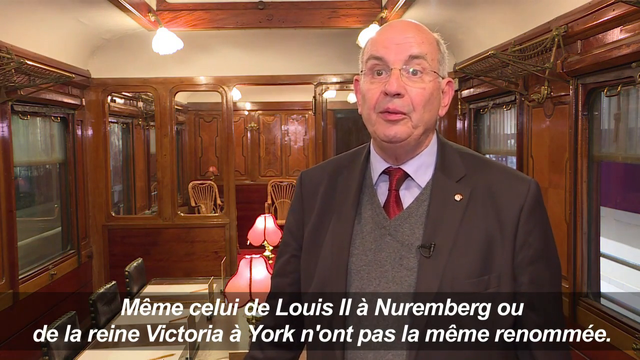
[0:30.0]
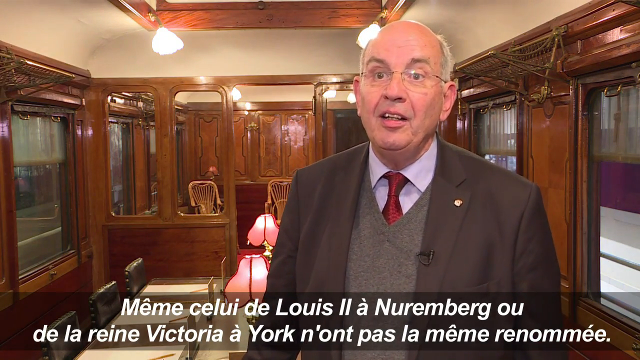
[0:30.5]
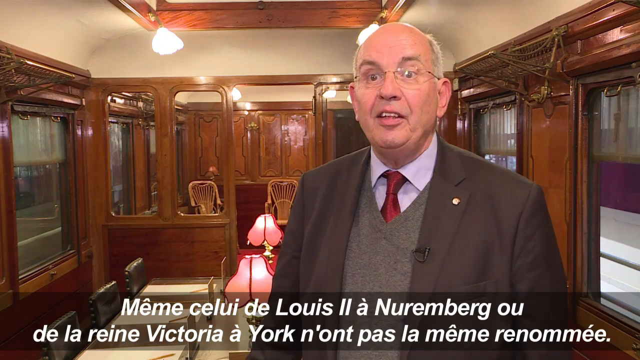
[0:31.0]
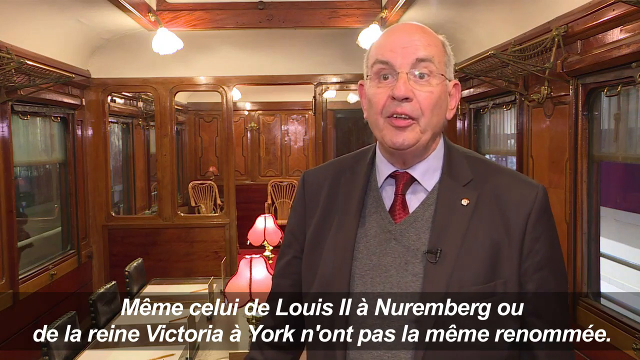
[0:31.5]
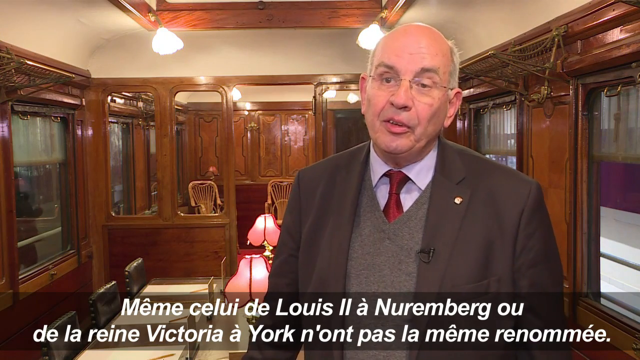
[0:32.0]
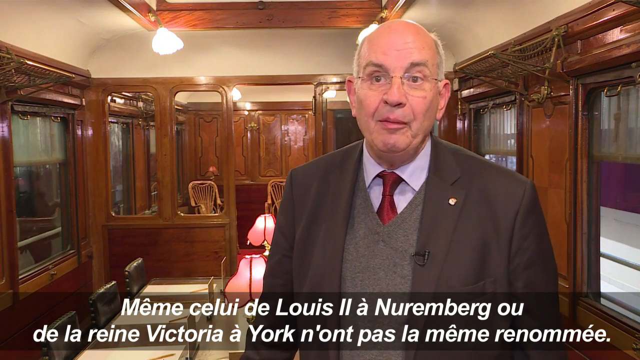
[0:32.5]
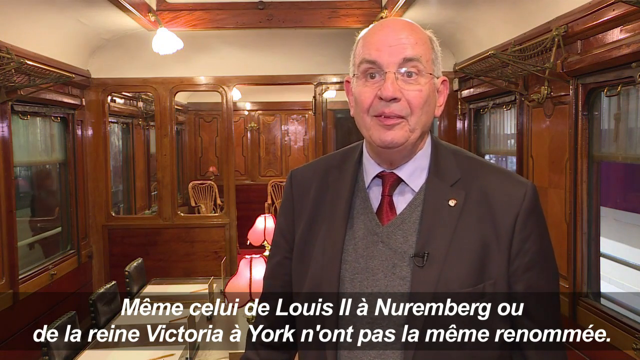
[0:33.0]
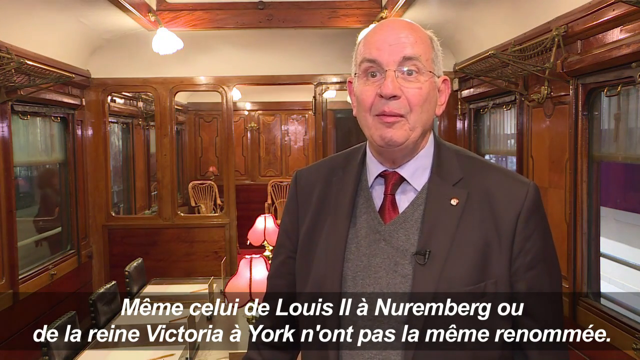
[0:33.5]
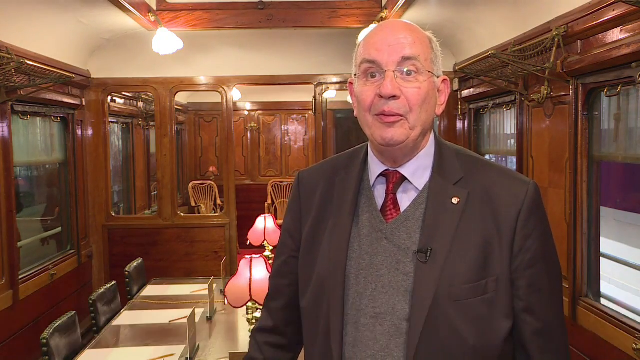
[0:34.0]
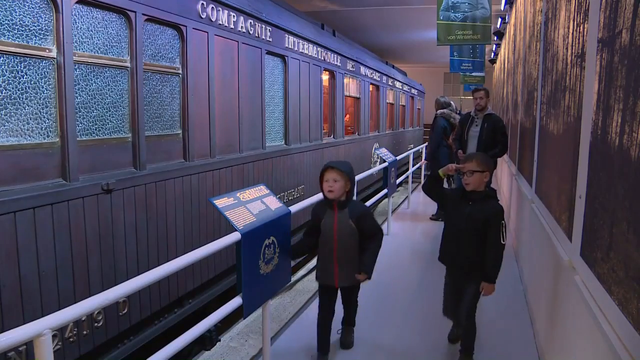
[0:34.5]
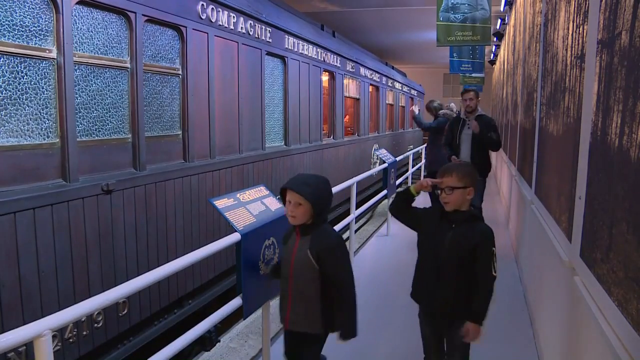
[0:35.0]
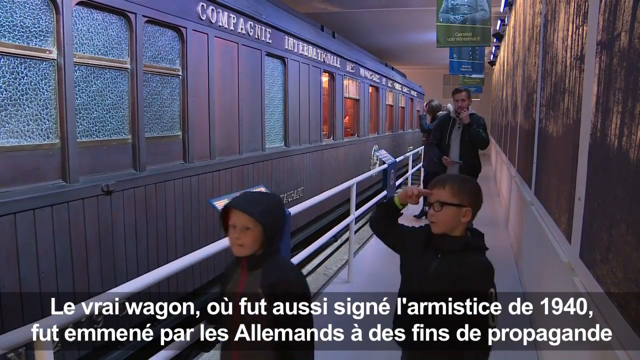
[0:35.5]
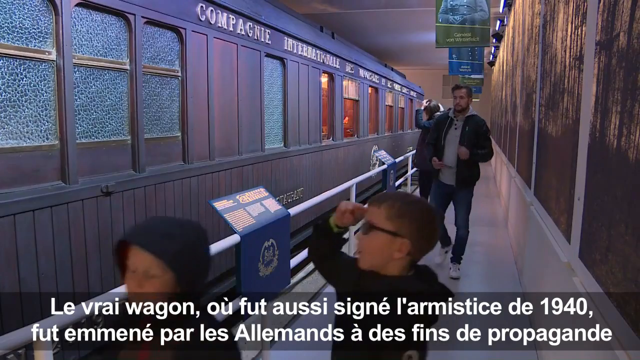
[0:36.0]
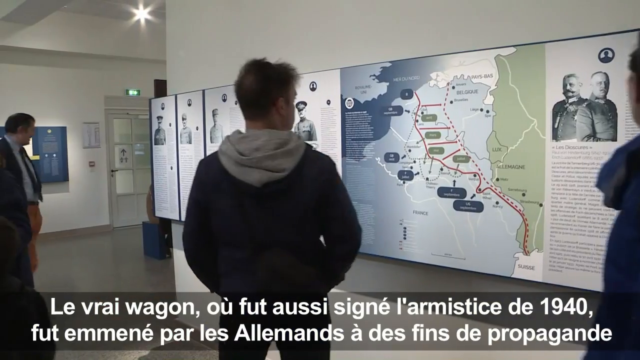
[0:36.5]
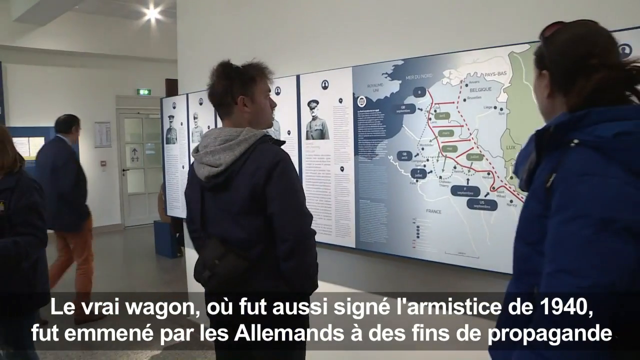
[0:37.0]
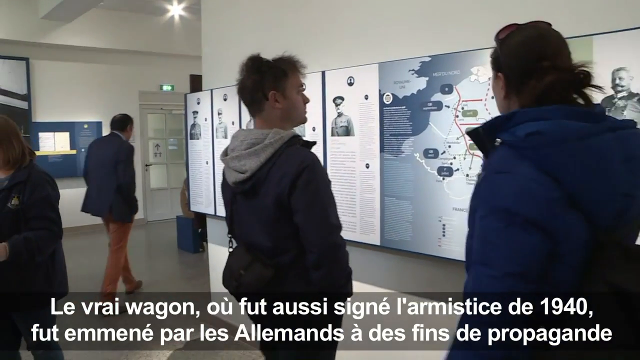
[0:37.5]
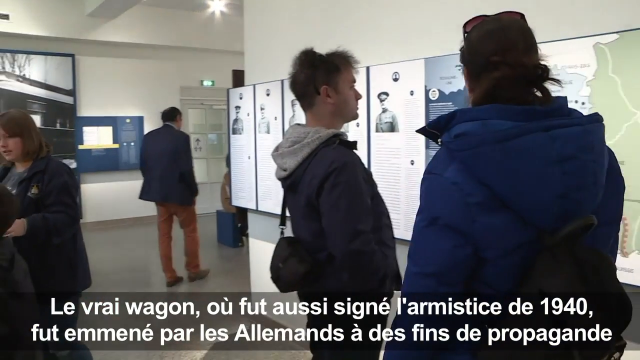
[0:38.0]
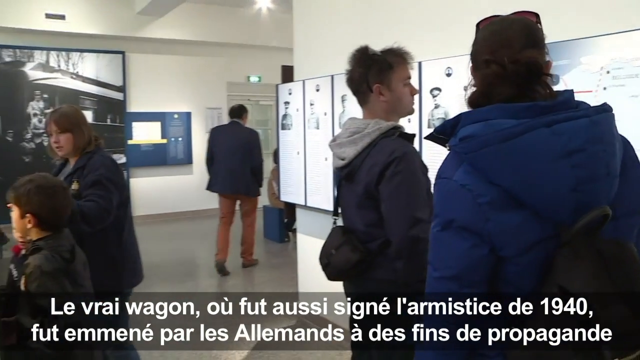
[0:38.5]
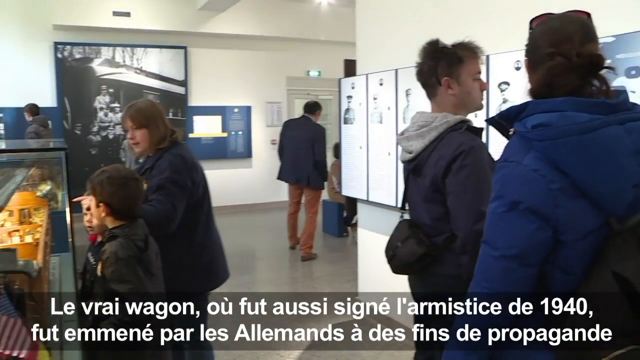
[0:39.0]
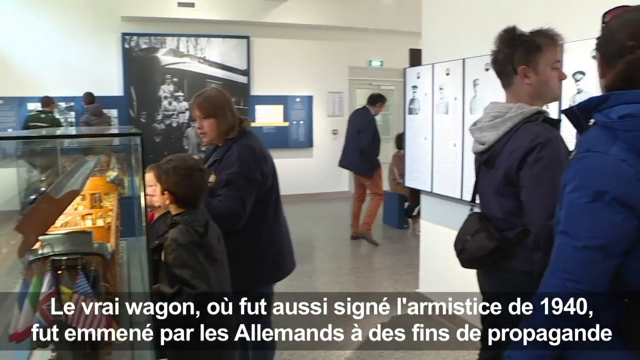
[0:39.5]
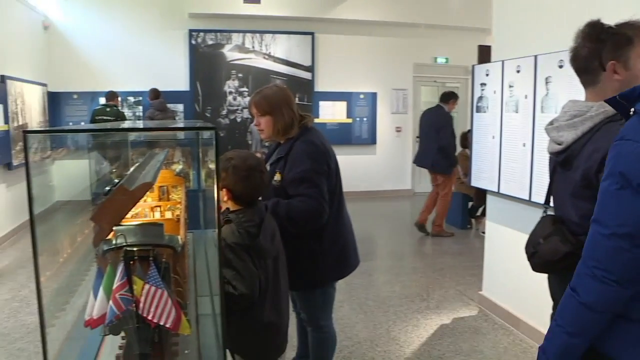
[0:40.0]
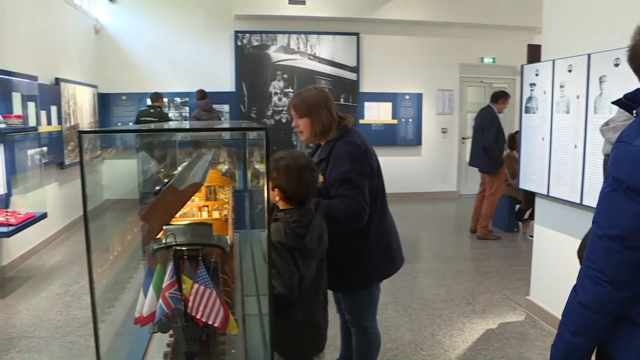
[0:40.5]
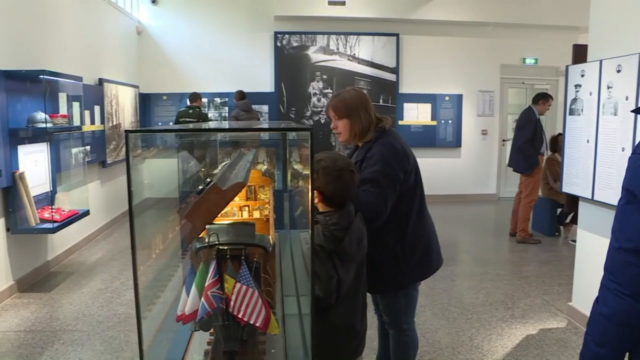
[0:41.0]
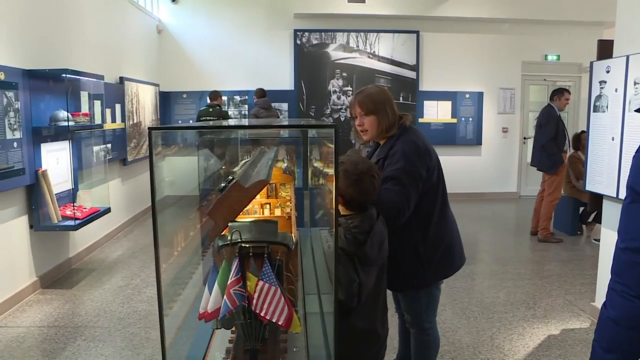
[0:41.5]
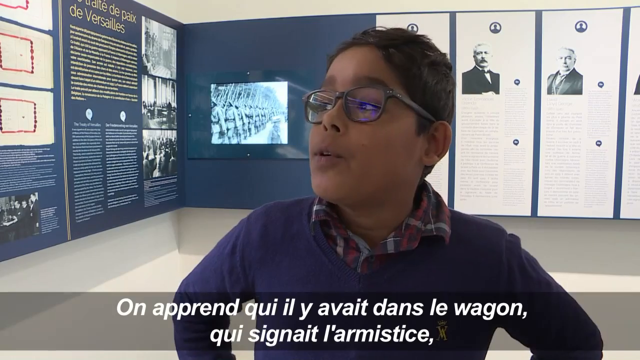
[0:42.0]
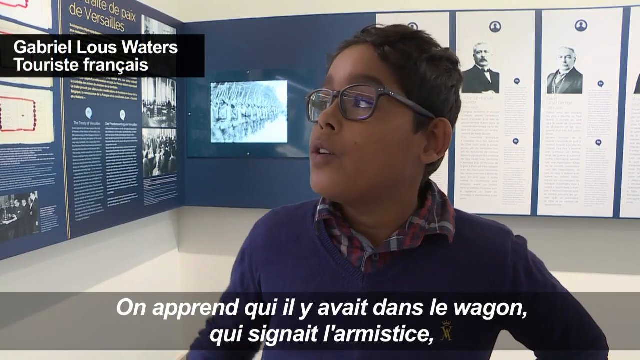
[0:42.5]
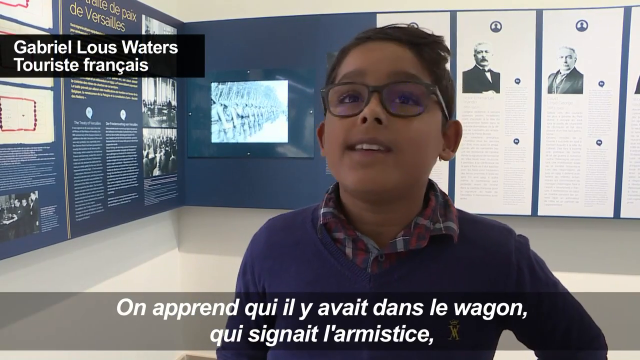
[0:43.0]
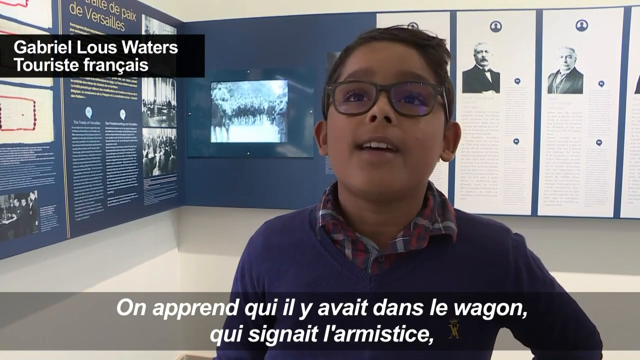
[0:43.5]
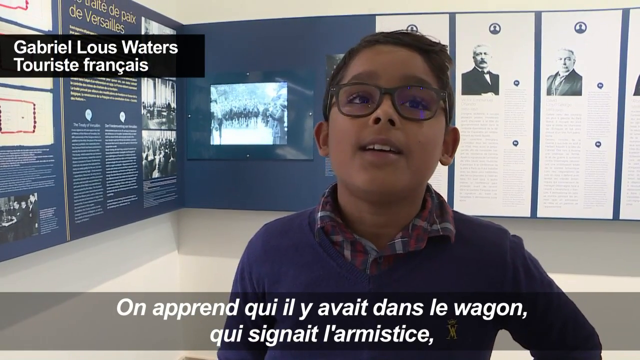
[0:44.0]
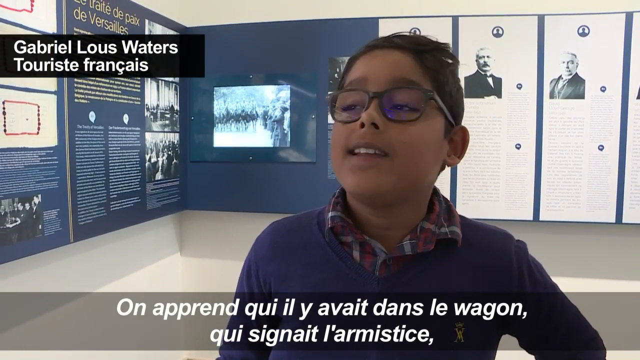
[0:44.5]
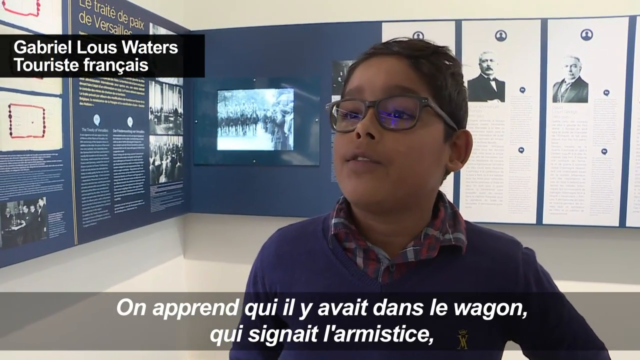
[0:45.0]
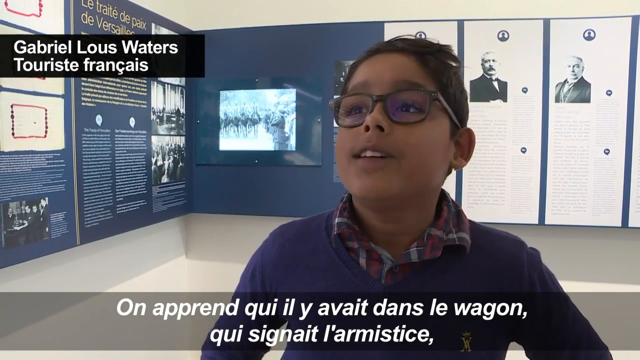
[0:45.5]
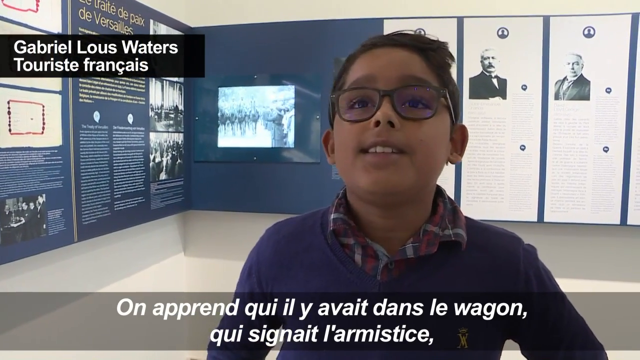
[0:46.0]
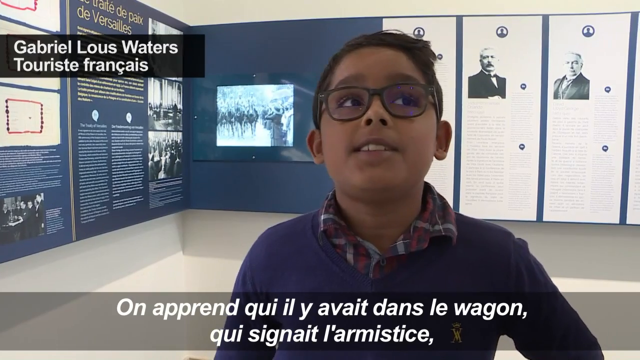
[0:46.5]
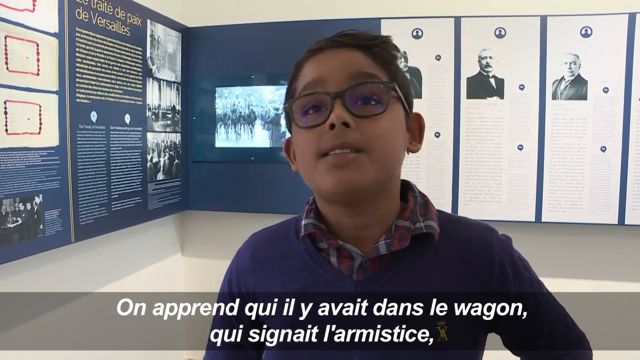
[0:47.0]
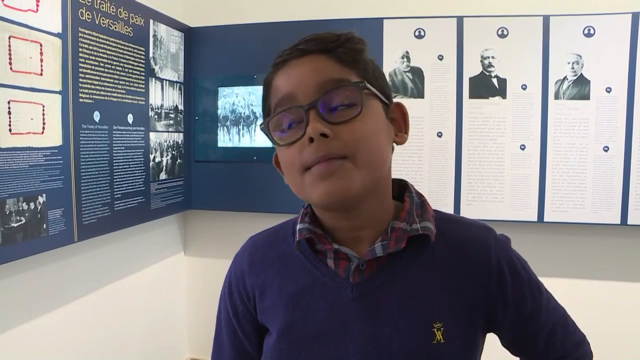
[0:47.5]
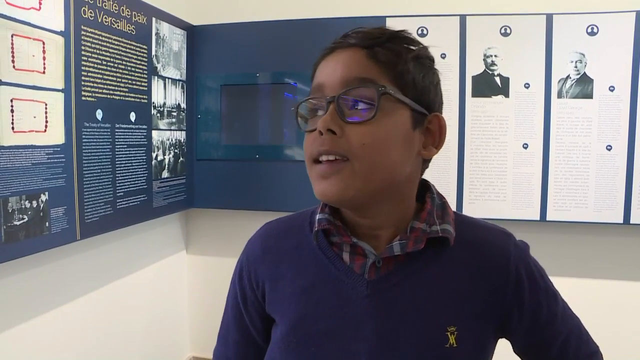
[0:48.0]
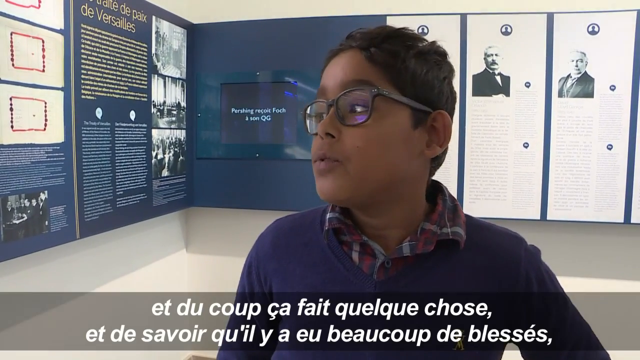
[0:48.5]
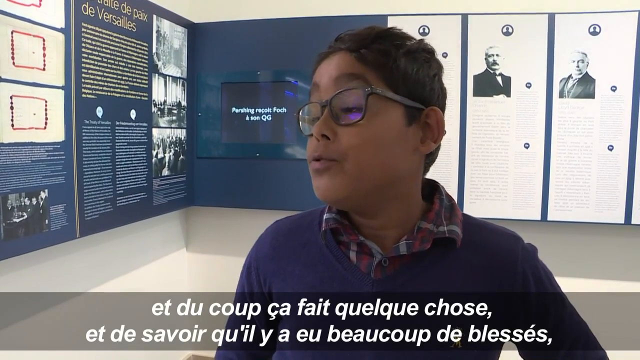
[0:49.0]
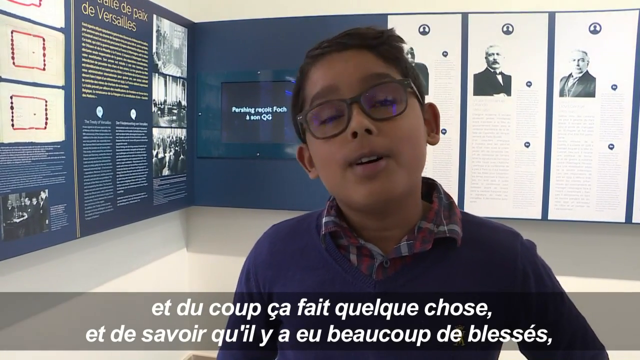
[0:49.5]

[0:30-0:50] Bernard Letemps, president of the Association du Memorial de la Clairiere, talks inside the carriage in the museum. The view then shows the outside of the carriage, with a couple of children and other members of the public walking past it beside a guardrail. One of the boys at the front, on the right, wearing glasses, points to his head as if saluting. A caption on the bottom of the screen begins "Le vrai wagon" and ends "à des fins de propagande". Another wall in the museum shows a map of Europe, with various members of the public looking at it, and there is a model of the carriage in a display case. A young boy, Gabrielle Lous Waters, a French tourist, talks to the camera; he wears glasses, a check shirt and a blue jumper. He looks slightly upwards and away from the camera as he talks, tilts his head and goes on to say "Et du coup ça fait quelque chose et de savoir qu'il y a eu beaucoup de blessés."